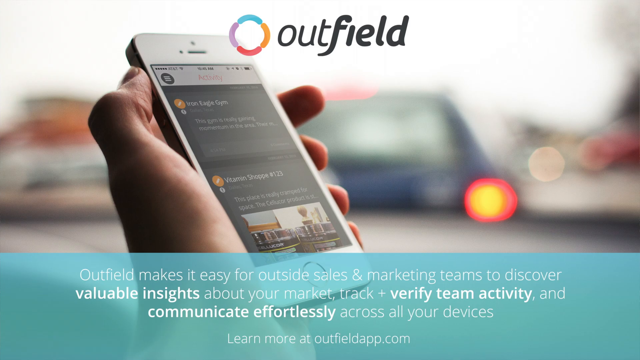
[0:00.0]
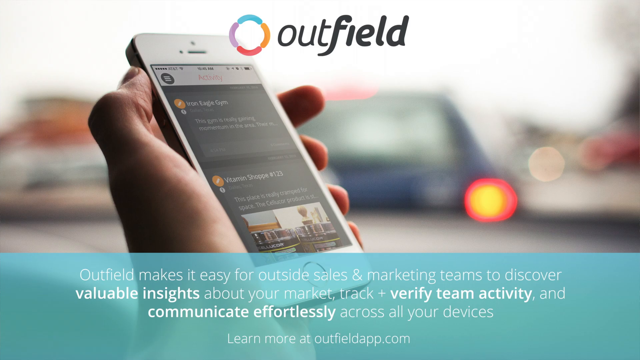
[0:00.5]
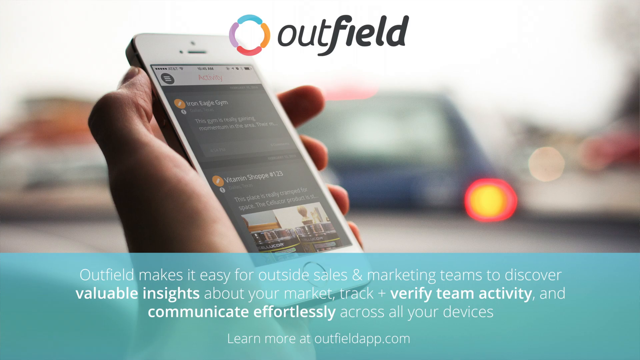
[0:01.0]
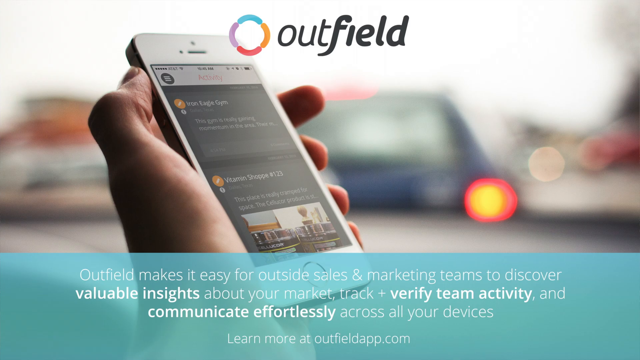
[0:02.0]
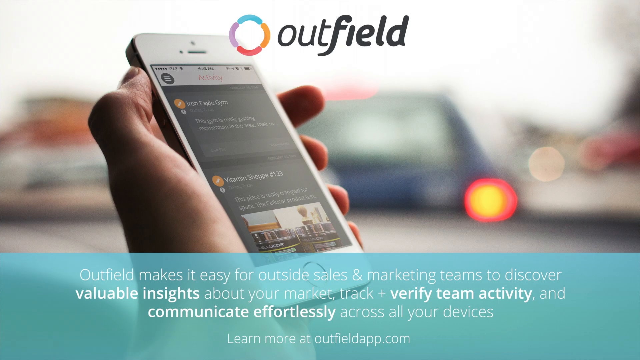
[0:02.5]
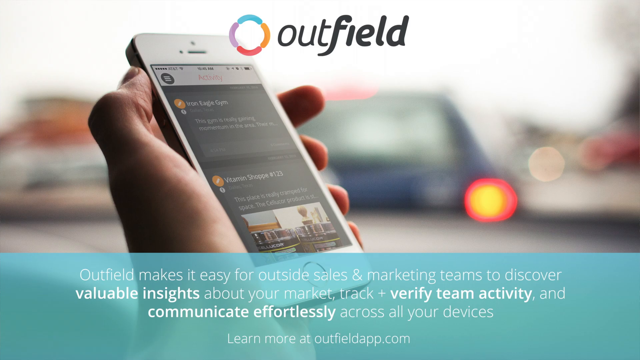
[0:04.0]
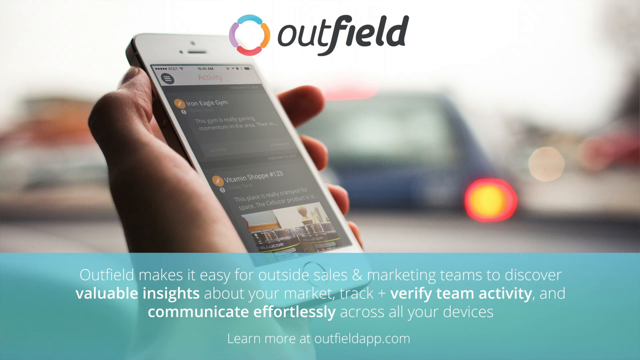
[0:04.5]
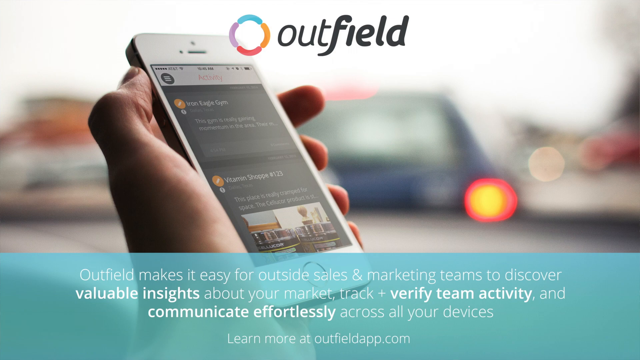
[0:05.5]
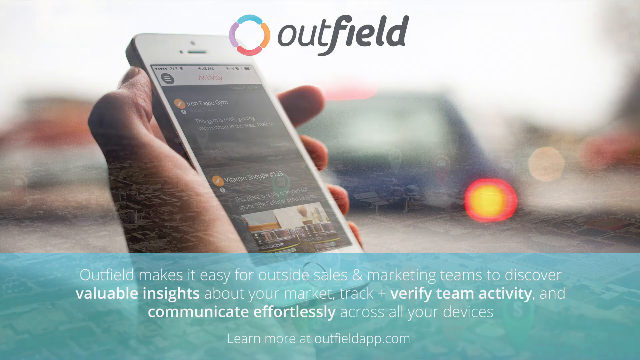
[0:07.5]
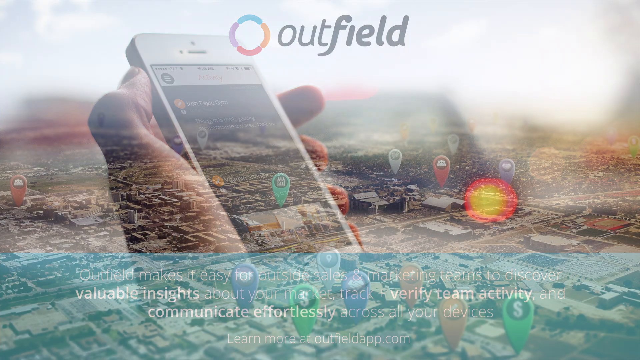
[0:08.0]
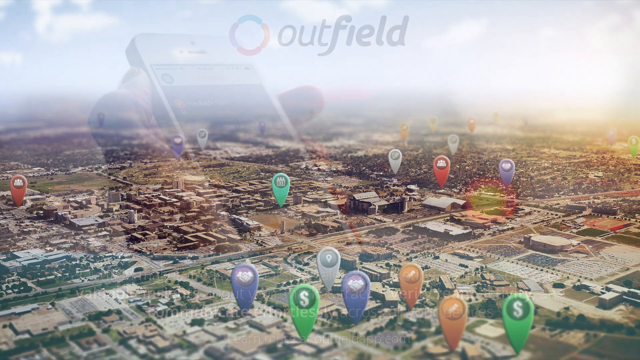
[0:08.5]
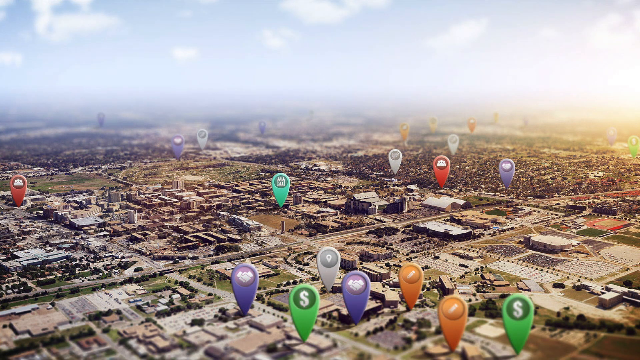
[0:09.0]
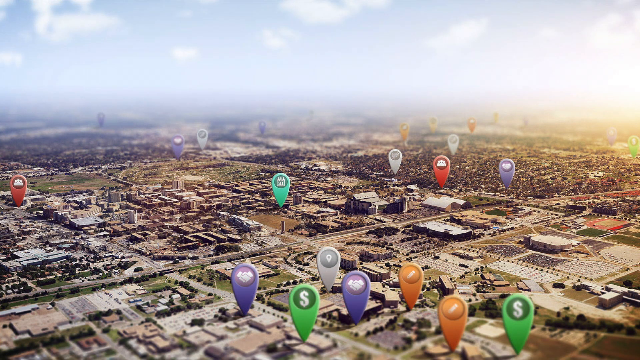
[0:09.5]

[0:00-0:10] At the top, "outfield" appears in gray, next to a circle in light blue, orange, red and purple that may be the logo. Underneath, someone's right hand holds a white mobile phone. At the bottom, on a light greenish-blue, turquoise area, white text reads "outfield makes it easy for outside sales and marketing teams to discover valuable insights about your market track and verify team activity and communication effortlessly across your devices." A map appears with pins in different colors: some orange, some green, and apparently purple as well.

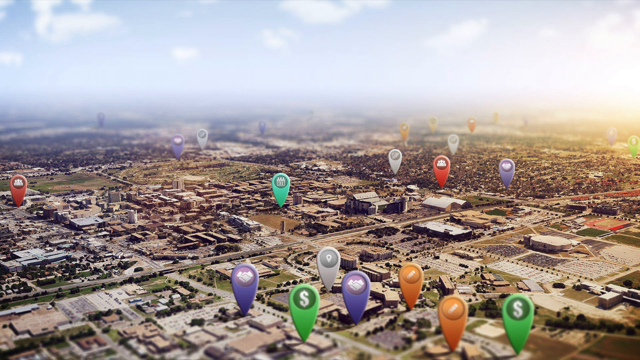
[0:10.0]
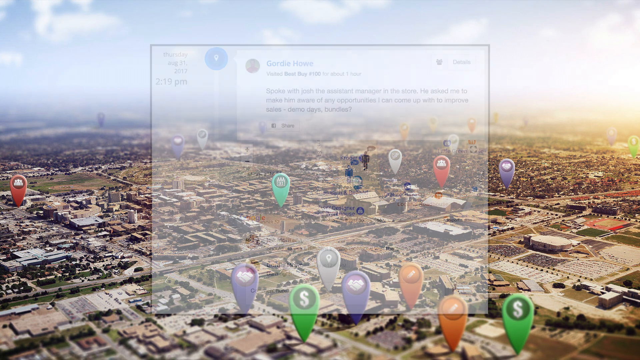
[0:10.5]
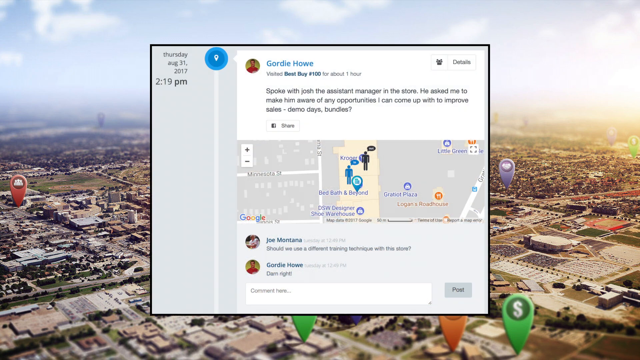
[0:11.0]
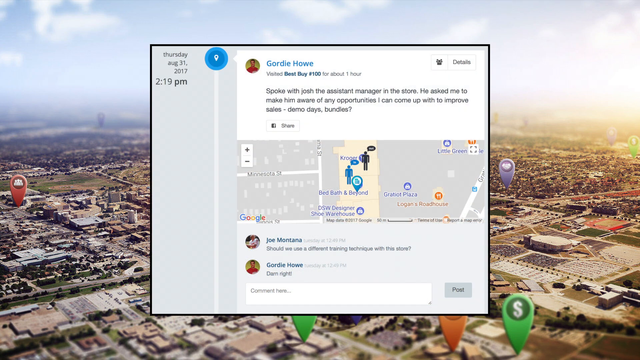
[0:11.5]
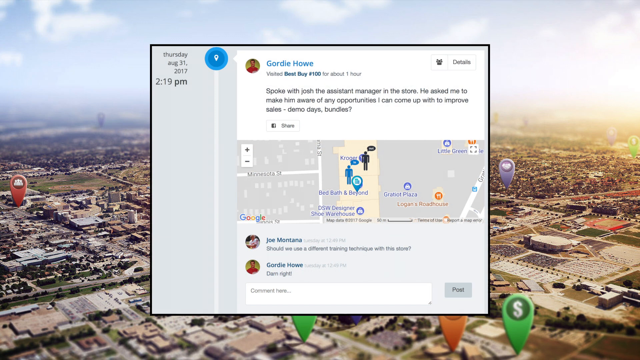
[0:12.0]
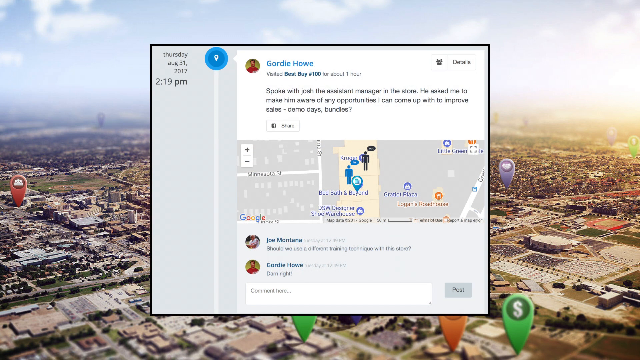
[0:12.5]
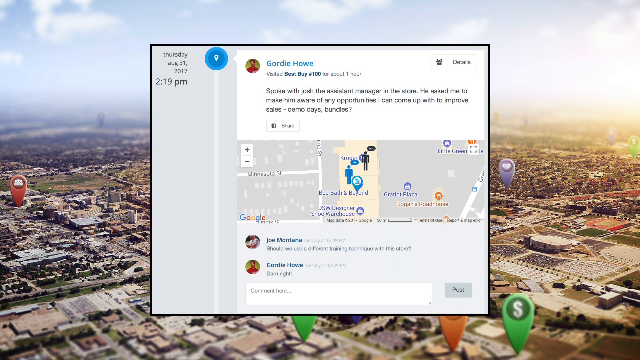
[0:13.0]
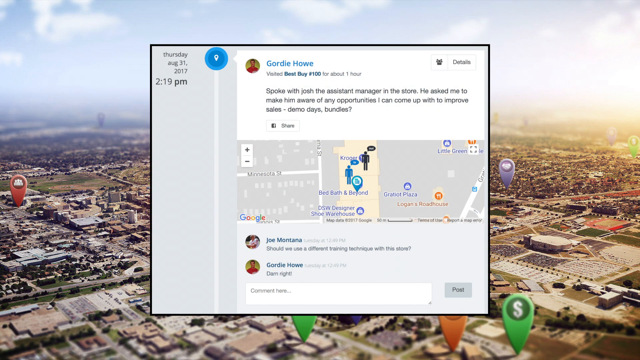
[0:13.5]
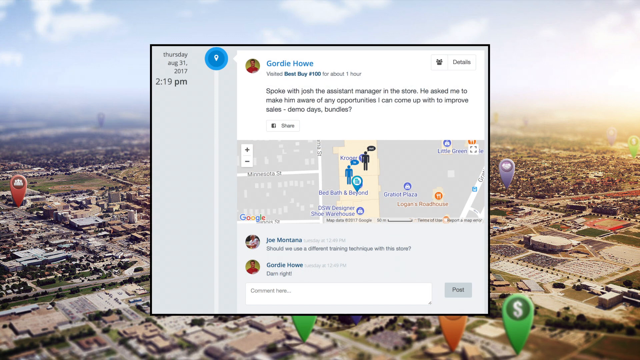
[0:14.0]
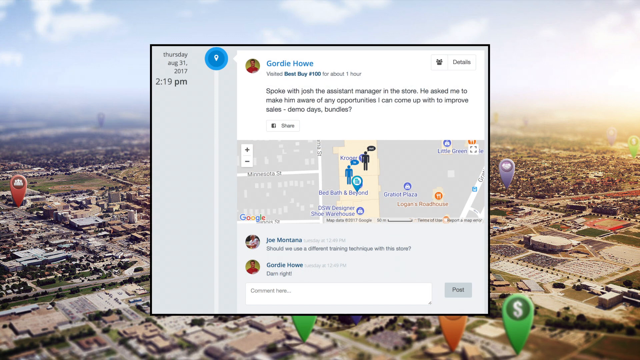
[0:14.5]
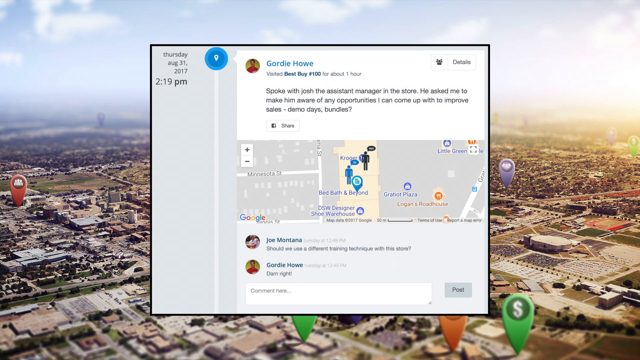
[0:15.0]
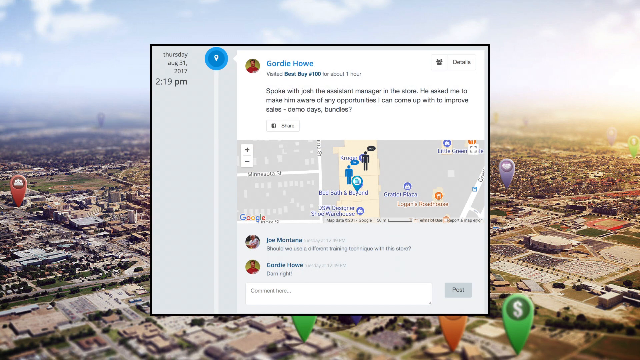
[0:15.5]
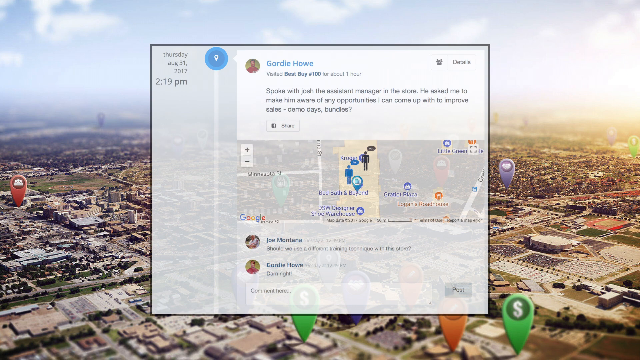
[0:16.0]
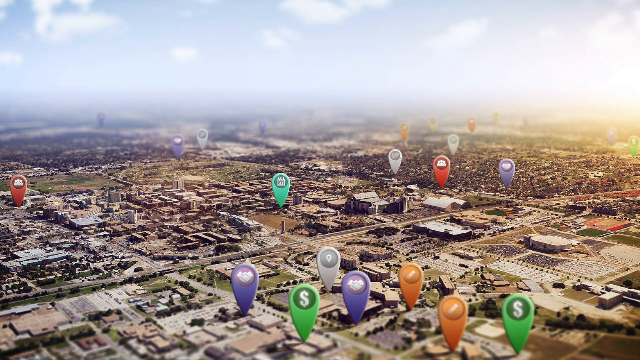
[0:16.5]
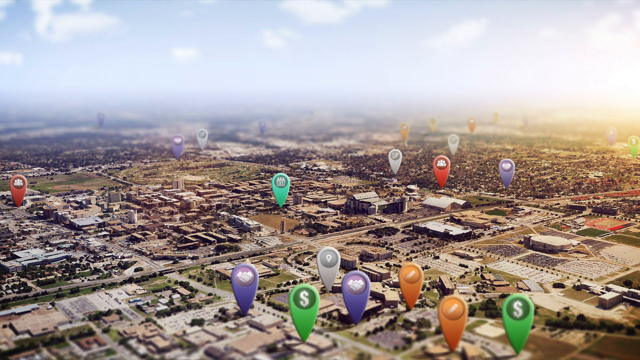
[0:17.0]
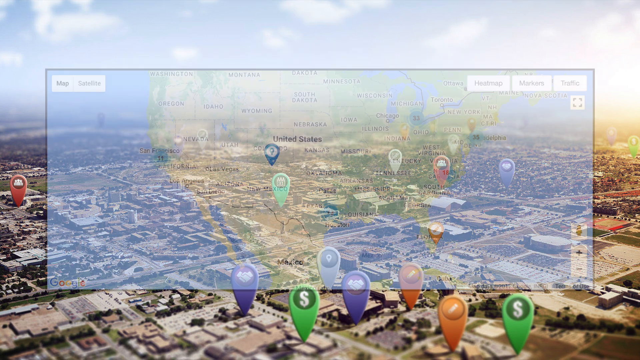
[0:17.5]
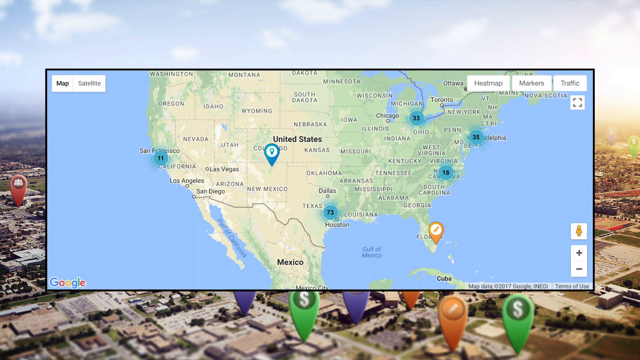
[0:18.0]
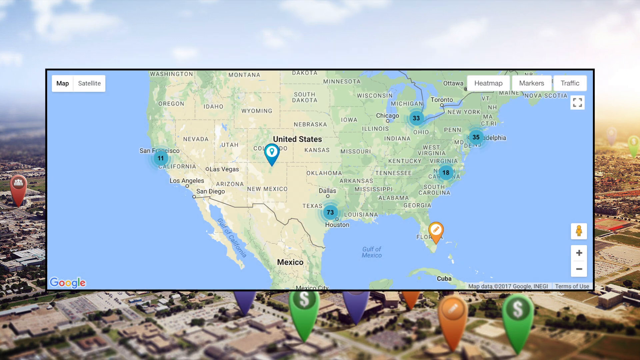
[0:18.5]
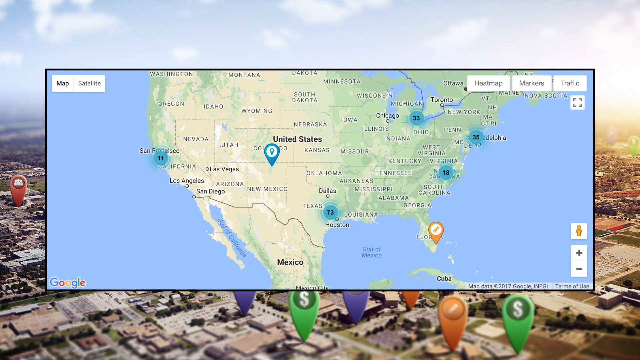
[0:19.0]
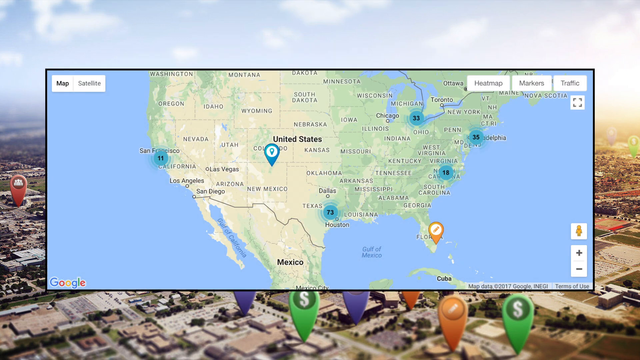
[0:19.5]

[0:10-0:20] The sky at the top is light blue with white clouds. The sun is on the right-hand side; it is not directly visible, but its sunshine is. The view is aerial, and the buildings and houses look very small, as if seen from an airplane landing or taking off. Pins appear as on a map, in red, grayish silver, green, orange and purple. A pop-up appears with the name "Gordie Howe" and the text "spoke with Josh the assistant manager in the store. He asked me to make him aware of any opportunities I could come up with to improve sales. Demo days?"